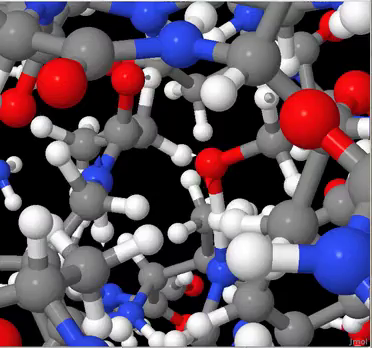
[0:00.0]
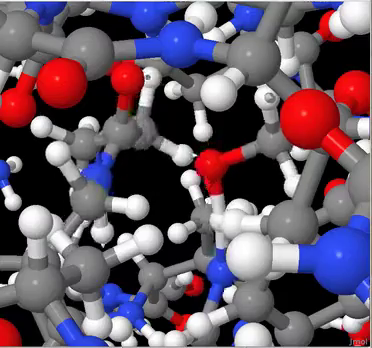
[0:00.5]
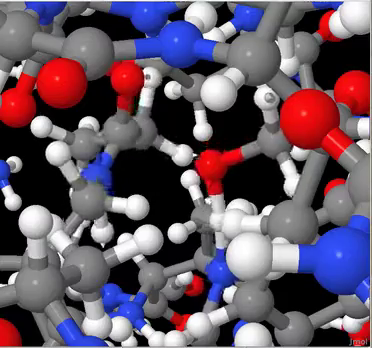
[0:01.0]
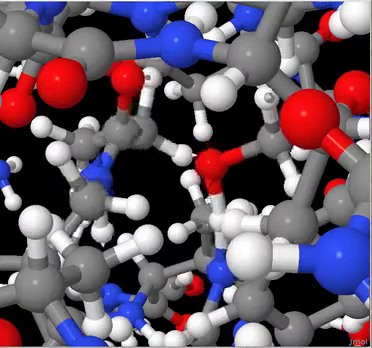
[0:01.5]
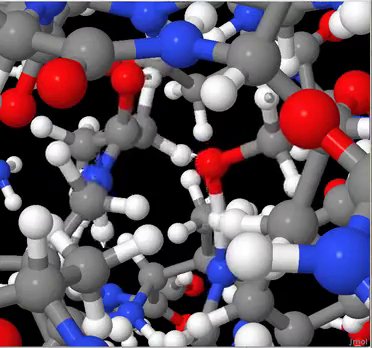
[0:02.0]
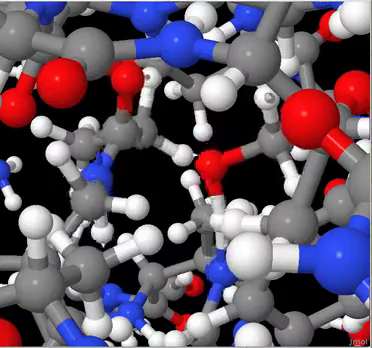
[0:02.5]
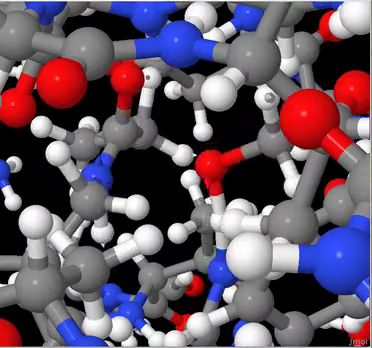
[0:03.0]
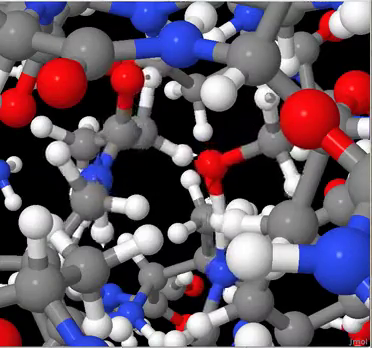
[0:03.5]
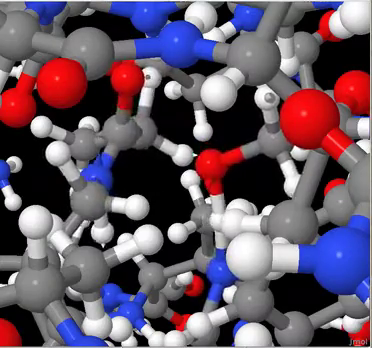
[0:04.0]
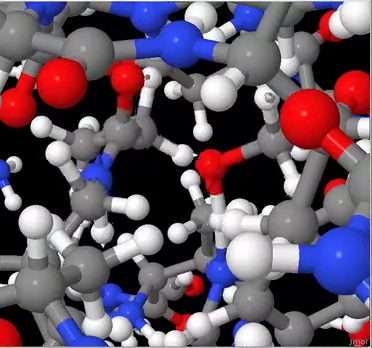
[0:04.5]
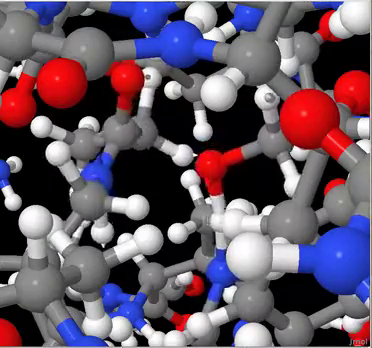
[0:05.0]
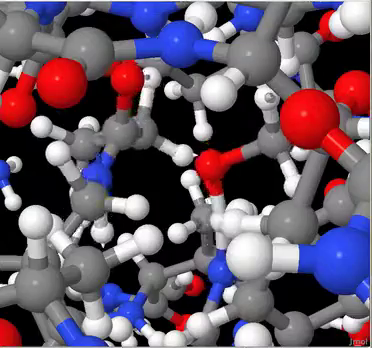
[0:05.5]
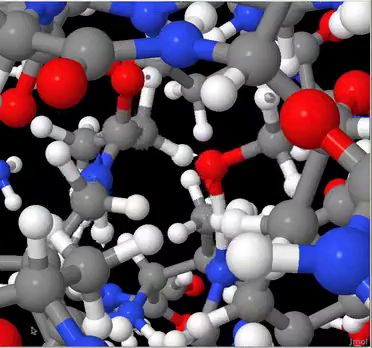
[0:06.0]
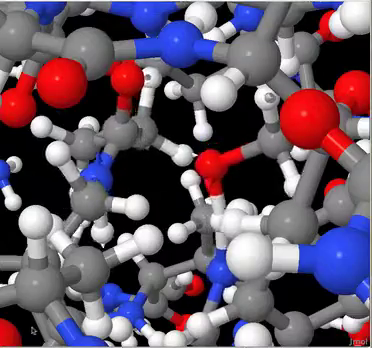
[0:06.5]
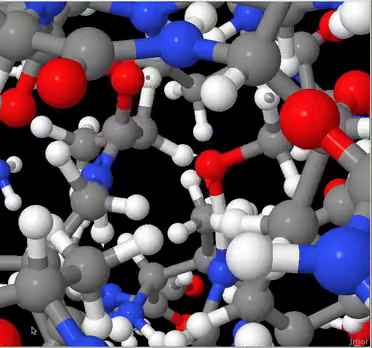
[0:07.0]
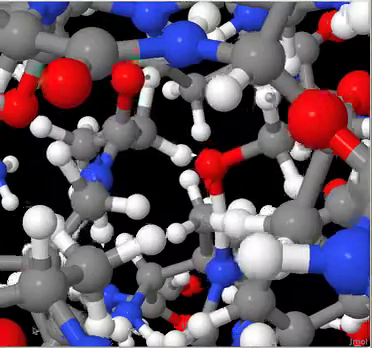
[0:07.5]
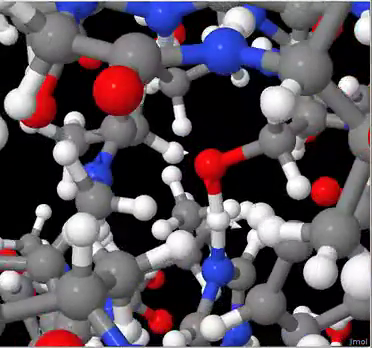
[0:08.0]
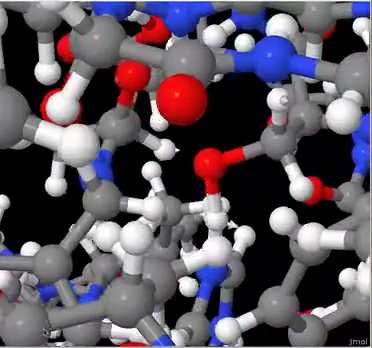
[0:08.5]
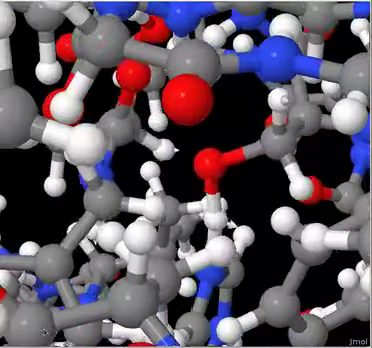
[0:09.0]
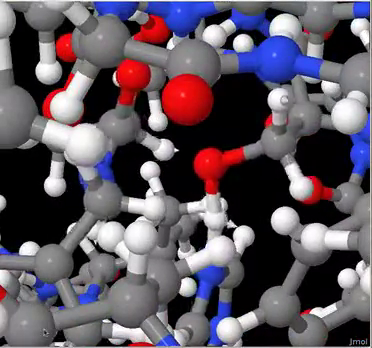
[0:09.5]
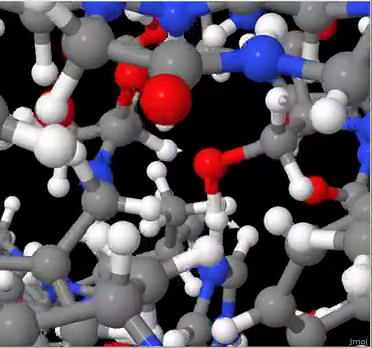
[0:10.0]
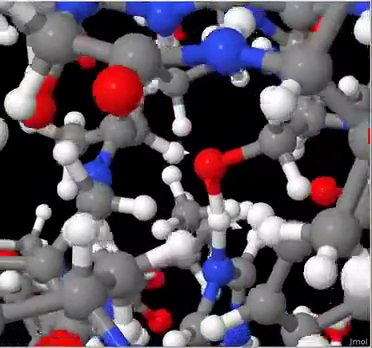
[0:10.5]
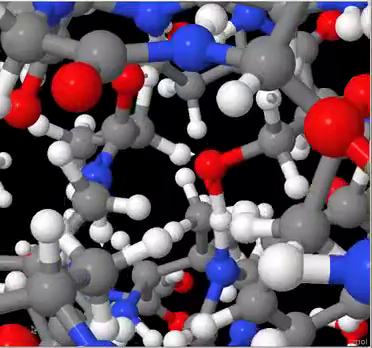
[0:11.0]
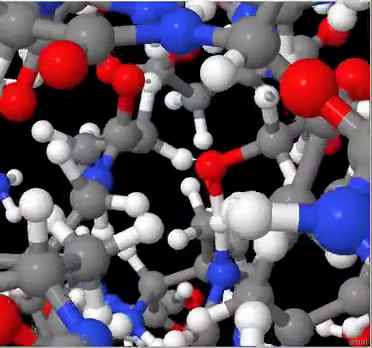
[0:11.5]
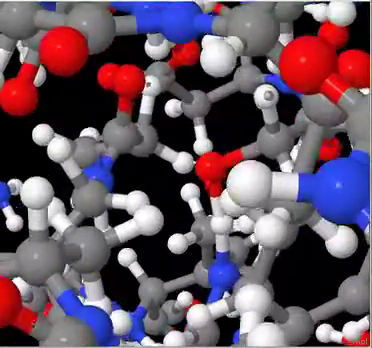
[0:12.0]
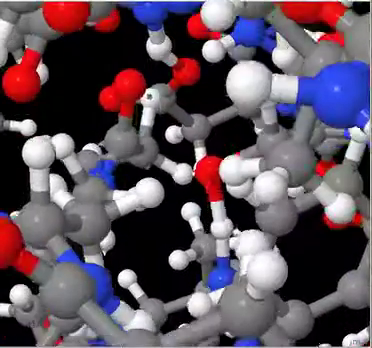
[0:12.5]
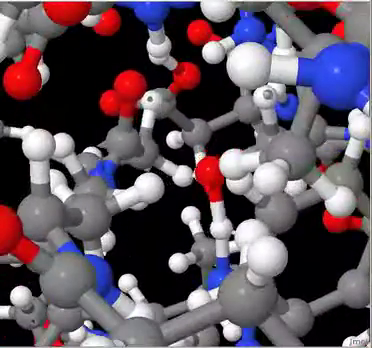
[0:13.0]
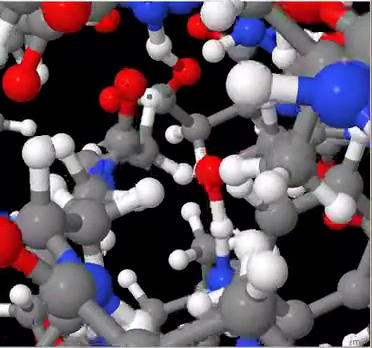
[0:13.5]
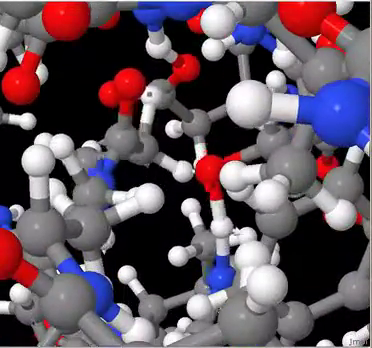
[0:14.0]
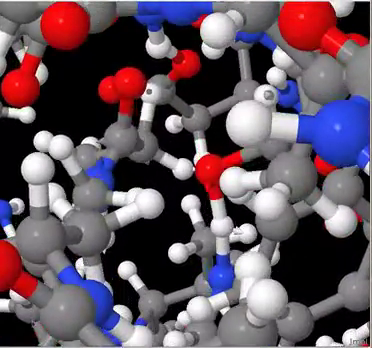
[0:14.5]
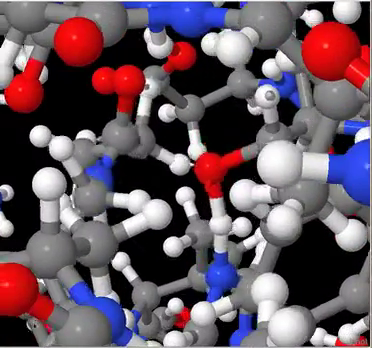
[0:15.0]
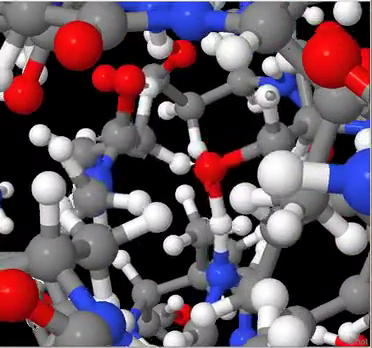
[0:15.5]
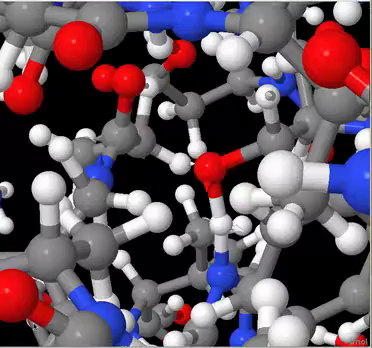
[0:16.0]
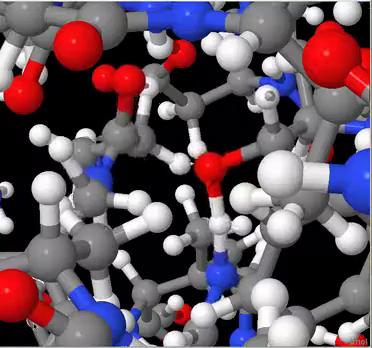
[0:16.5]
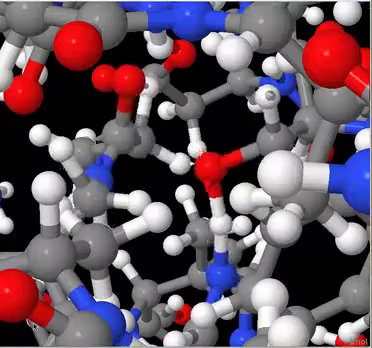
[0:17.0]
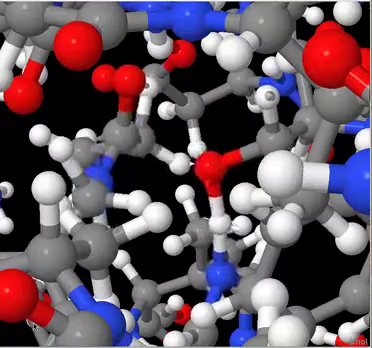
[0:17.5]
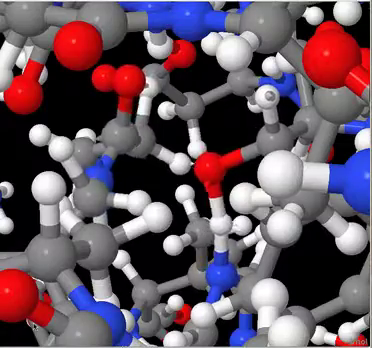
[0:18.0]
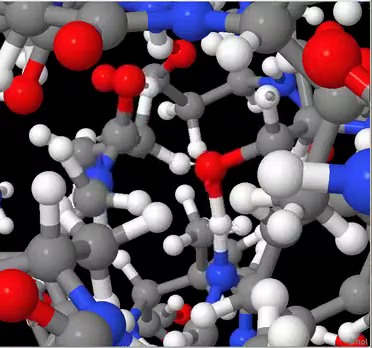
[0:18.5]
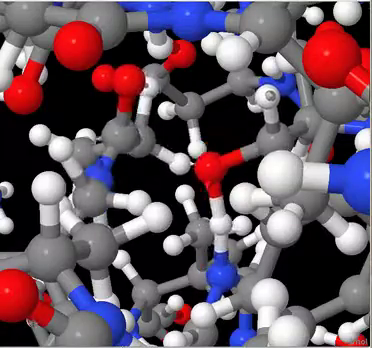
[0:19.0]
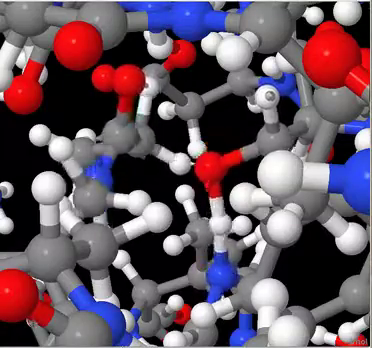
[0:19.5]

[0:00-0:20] Gray, red, and blue attachments are shown. Gray pieces are at the center, with red and white attachments sticking out from them. A couple of them in the top left move back and forth. Some are connected, while some have white ends with balls attached to these white tips. The blue and red pieces sometimes have exteriors that are unattached to anything, though others are attached to one another. Most of them are not moving, apart from the ones at the center of the screen, which move back and forth. The scene stays the same, but the camera angle changes: it pans left first, then goes back to the right and slowly pans down, while the movement of these objects continues in the center of the screen.